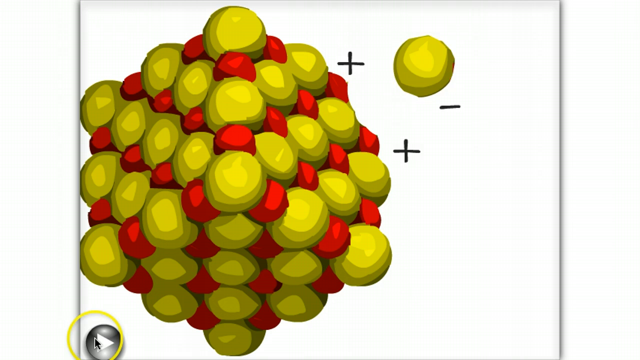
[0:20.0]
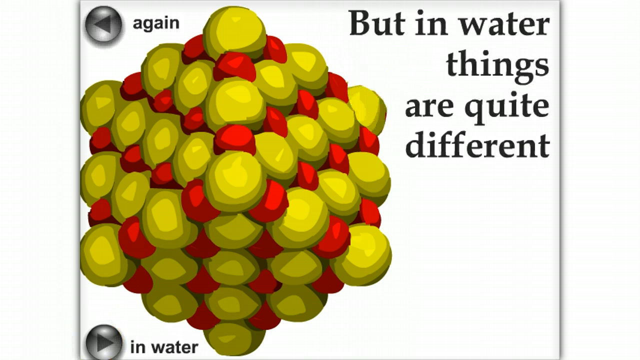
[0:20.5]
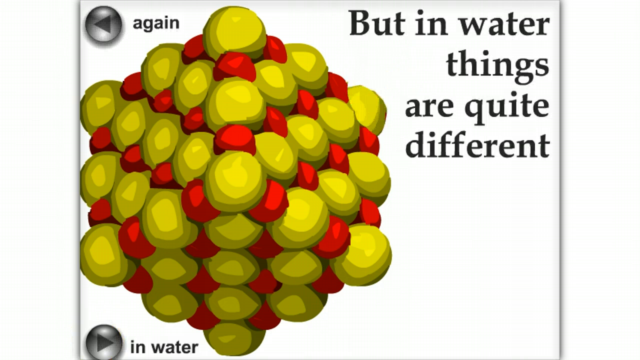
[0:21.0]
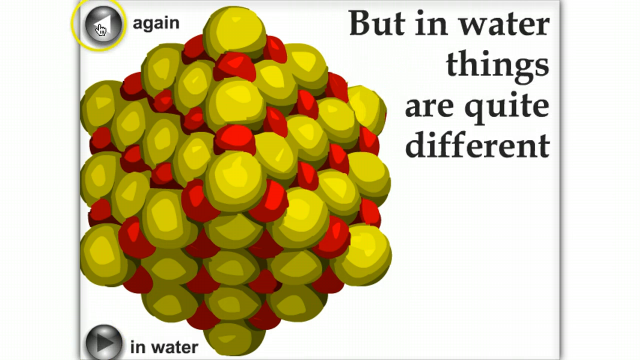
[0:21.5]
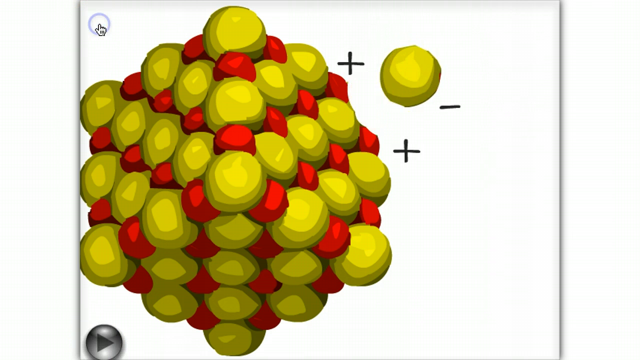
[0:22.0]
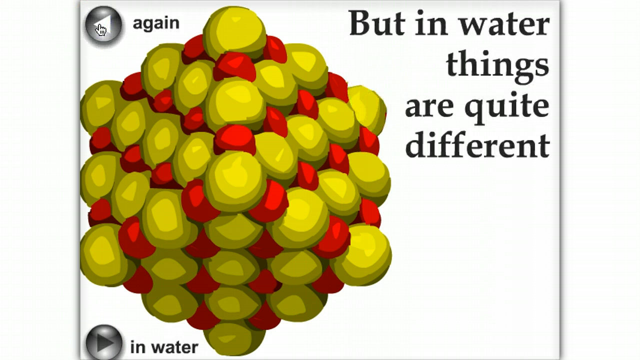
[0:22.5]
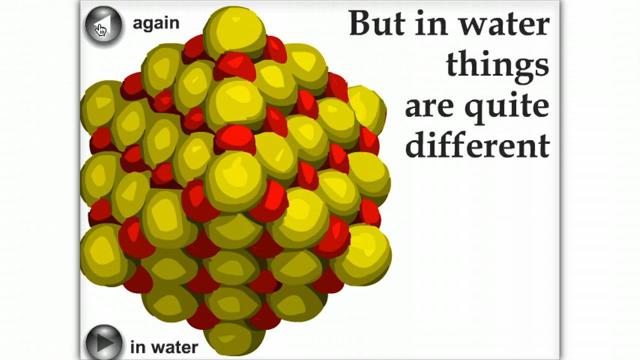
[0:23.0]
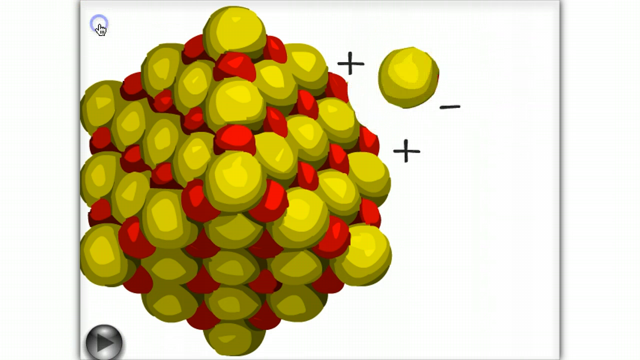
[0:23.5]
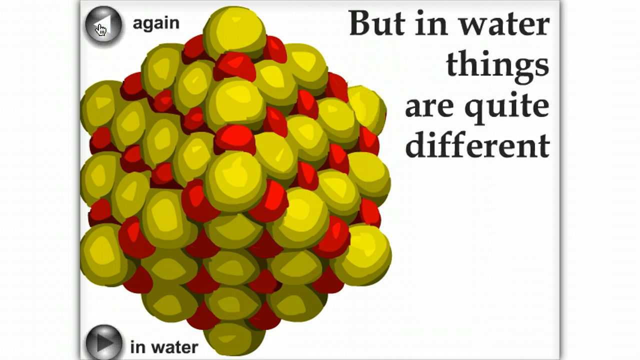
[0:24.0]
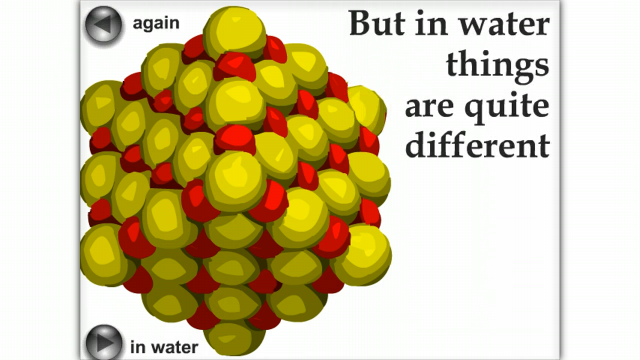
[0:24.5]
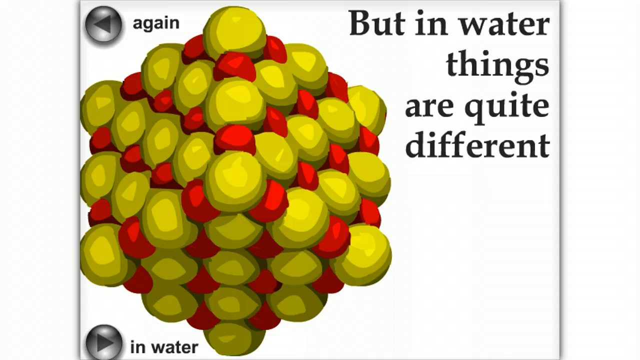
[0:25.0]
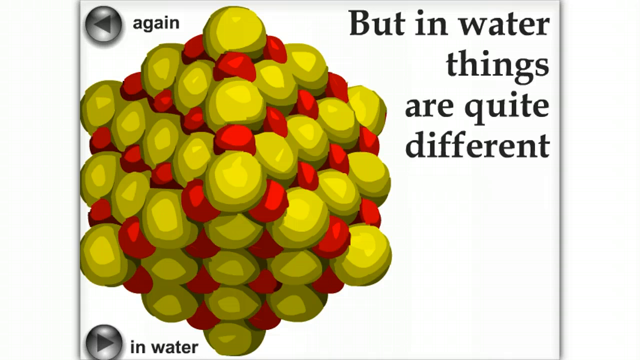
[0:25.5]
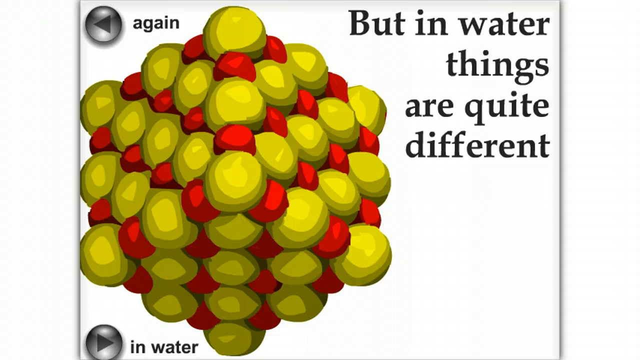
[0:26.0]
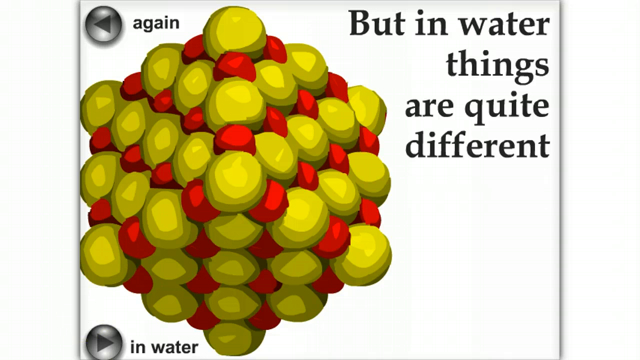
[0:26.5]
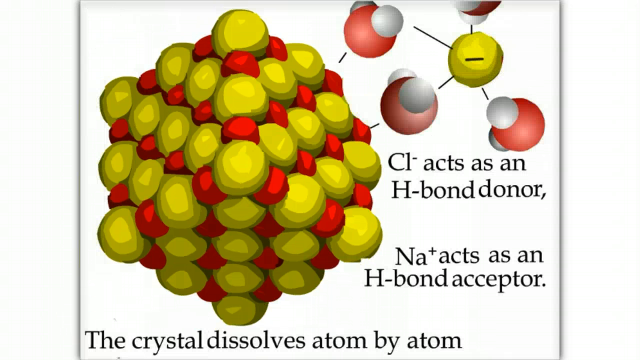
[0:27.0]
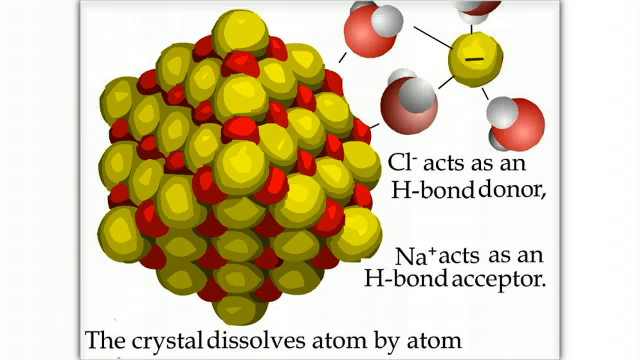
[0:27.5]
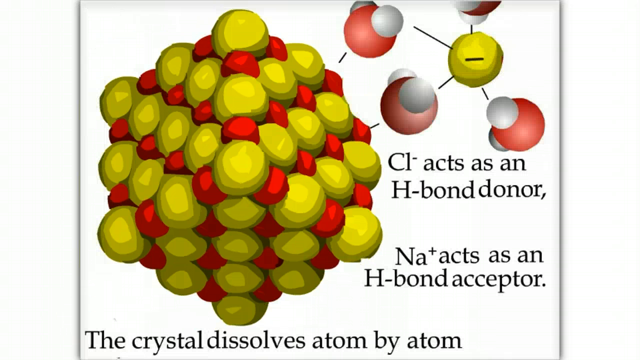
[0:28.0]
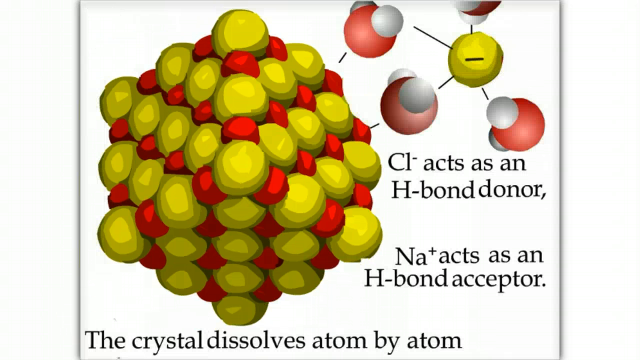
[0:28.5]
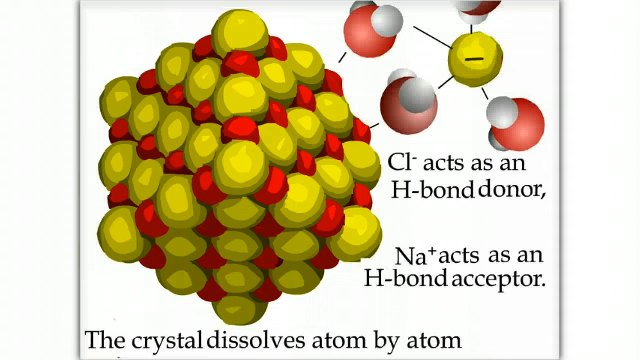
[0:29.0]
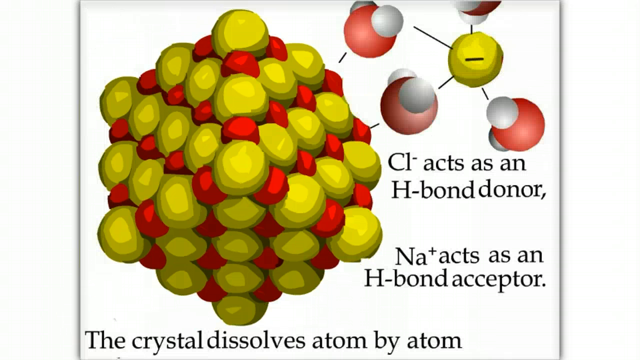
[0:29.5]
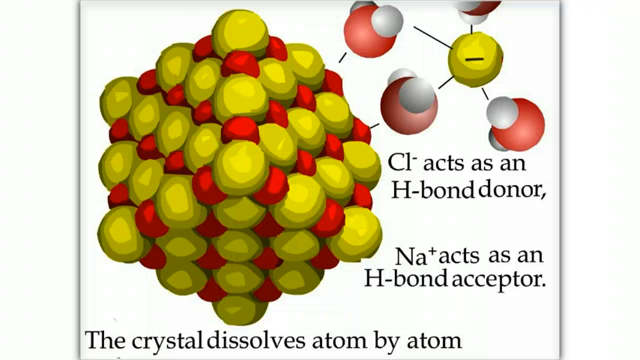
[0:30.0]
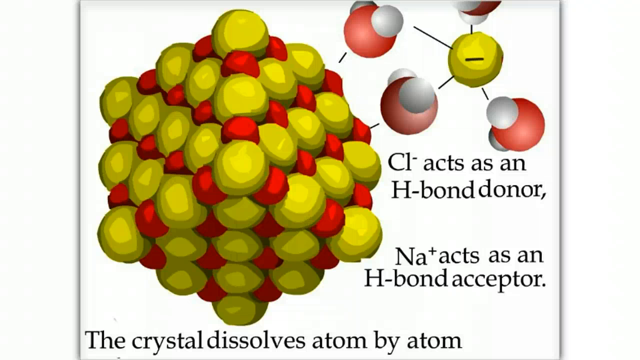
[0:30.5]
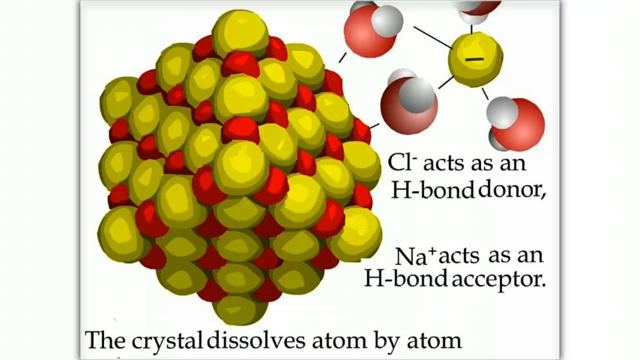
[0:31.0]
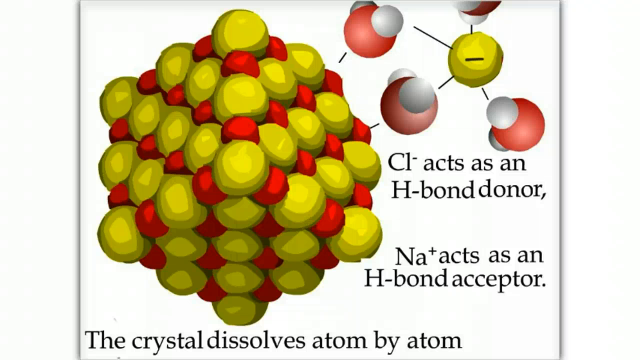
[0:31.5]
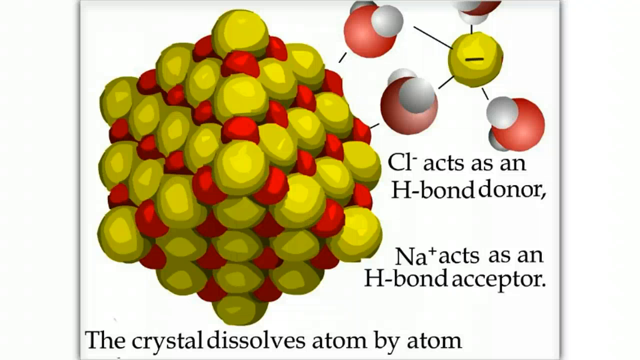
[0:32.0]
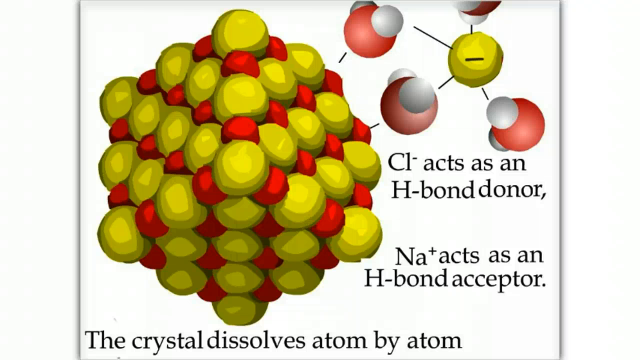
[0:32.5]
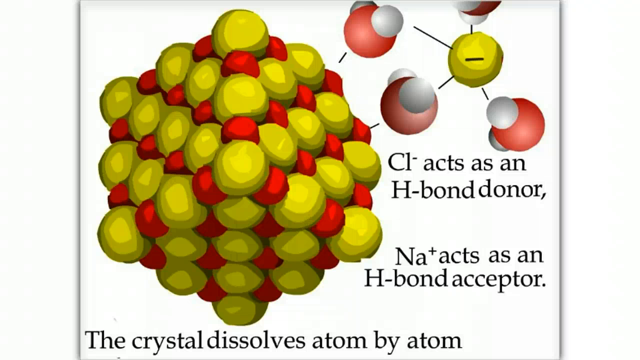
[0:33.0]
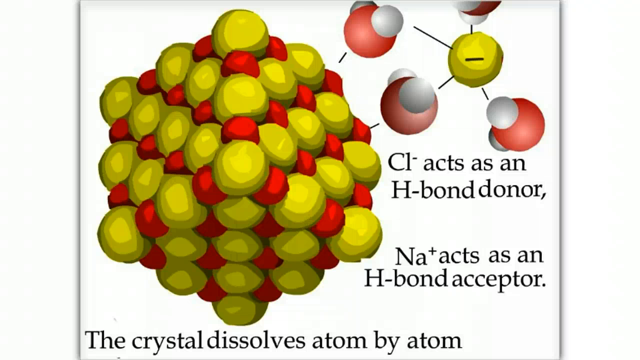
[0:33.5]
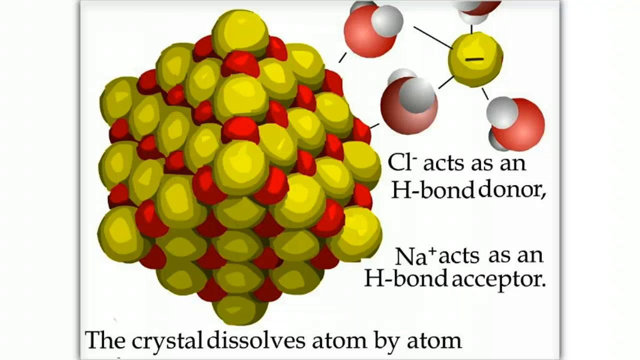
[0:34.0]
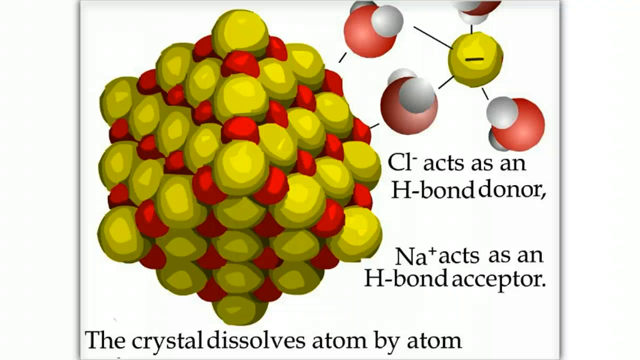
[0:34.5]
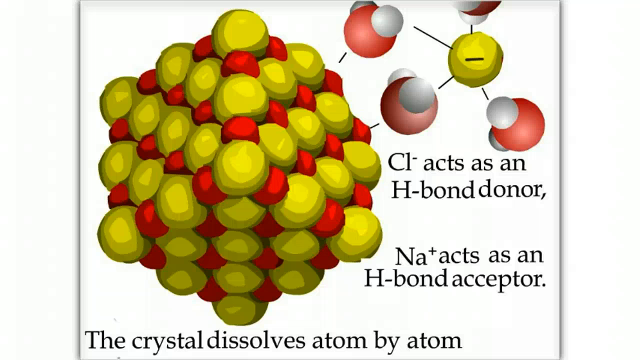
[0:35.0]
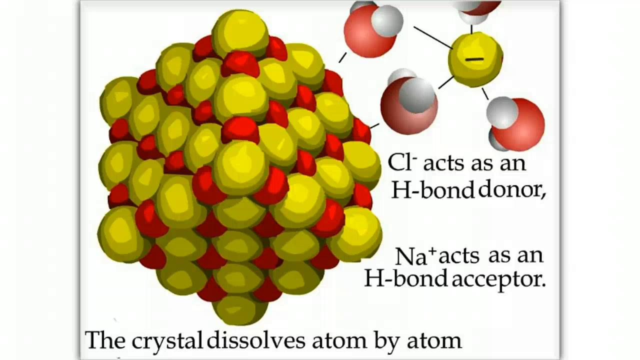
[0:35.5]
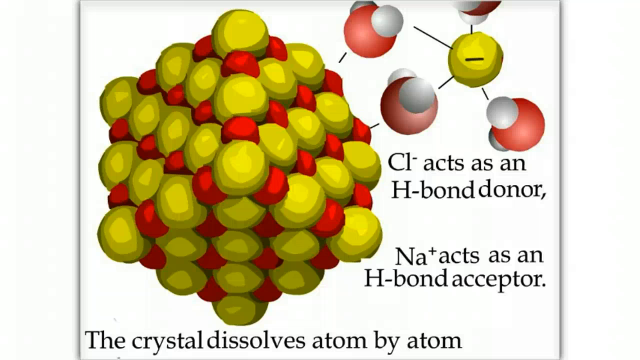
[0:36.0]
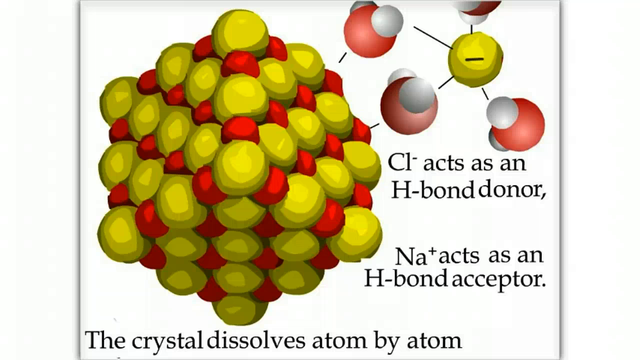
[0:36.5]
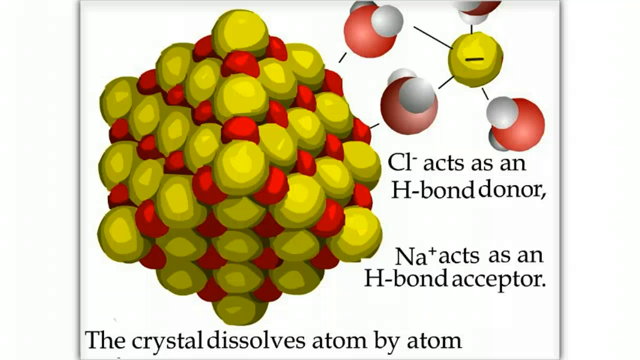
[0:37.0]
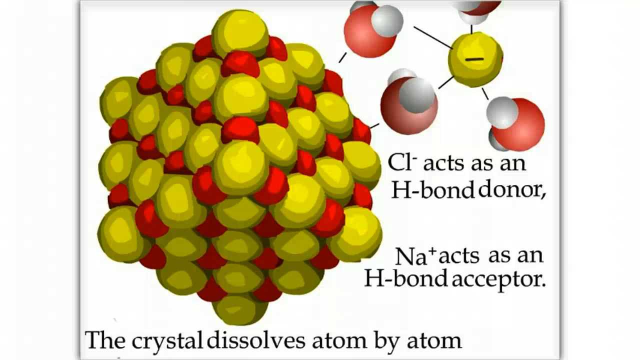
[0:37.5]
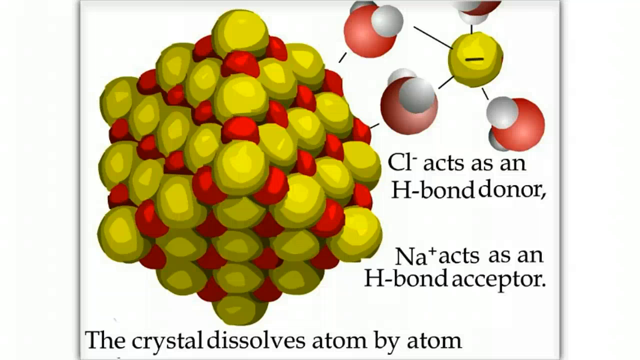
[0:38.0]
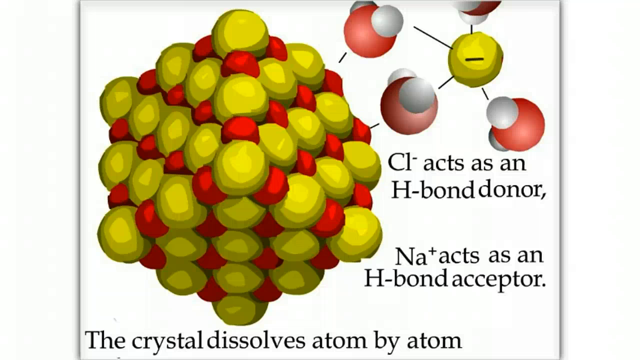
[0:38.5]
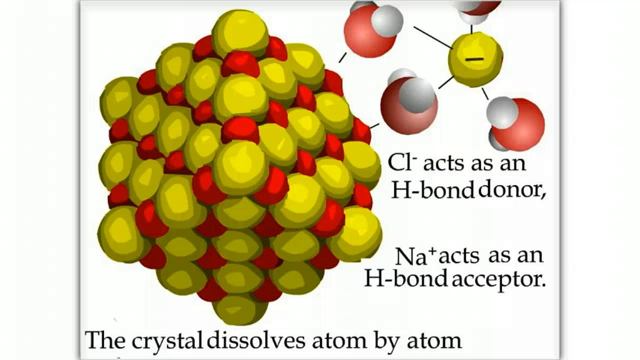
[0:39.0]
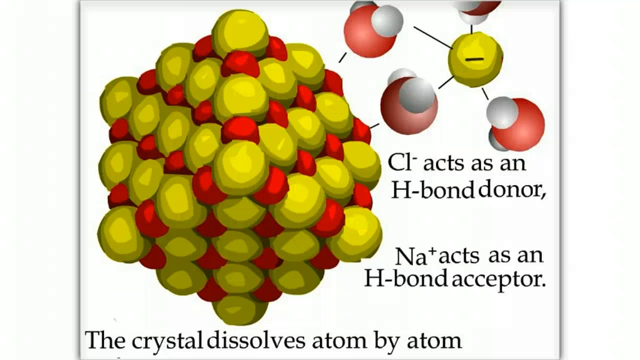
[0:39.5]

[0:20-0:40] A grey circular button with a left-pointing arrow appears in the top left corner of the screen. An ion, shown as a yellow circle, leaves the crystal, and the text "in water things are quite different" replaces the previous text. The slide changes to show more diagrams and interactions with different molecules, with red and white circles connected by lines at the top of the right side of the screen. The text now reads "Cl minus acts as an H bond donor, Na plus acts as an H bond acceptor." The screen stays static from here, showing the same yellow and red crystal on the left and large black font making up the text on the right.